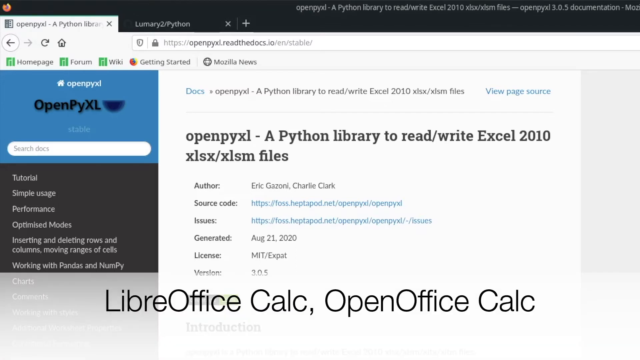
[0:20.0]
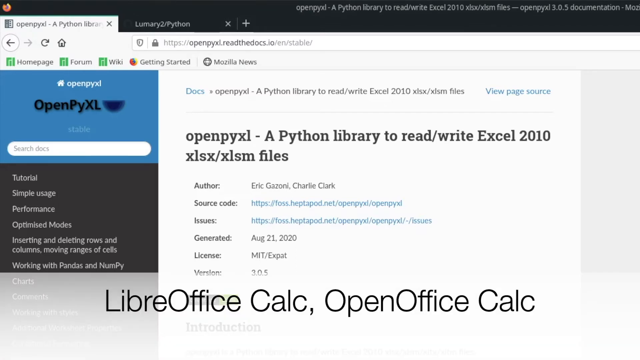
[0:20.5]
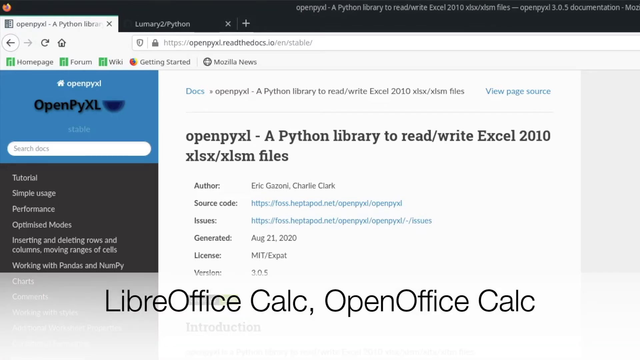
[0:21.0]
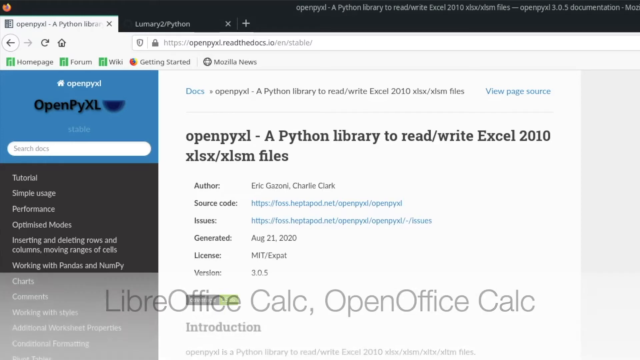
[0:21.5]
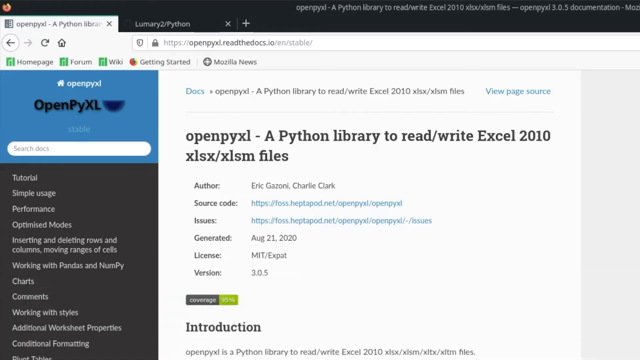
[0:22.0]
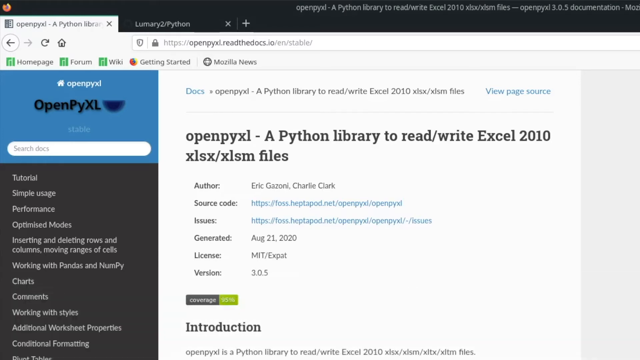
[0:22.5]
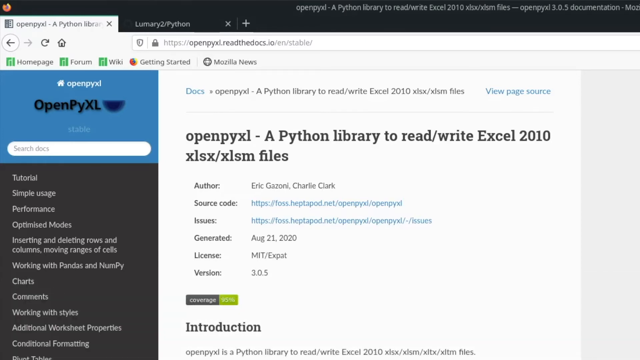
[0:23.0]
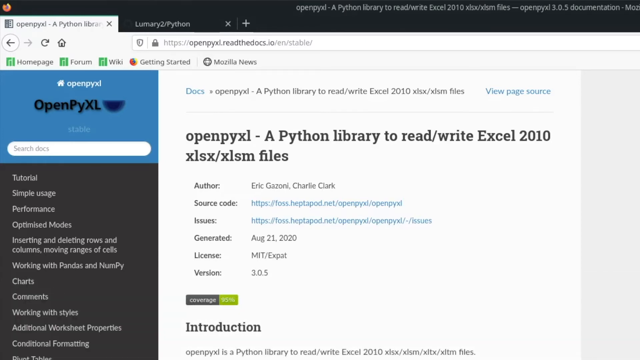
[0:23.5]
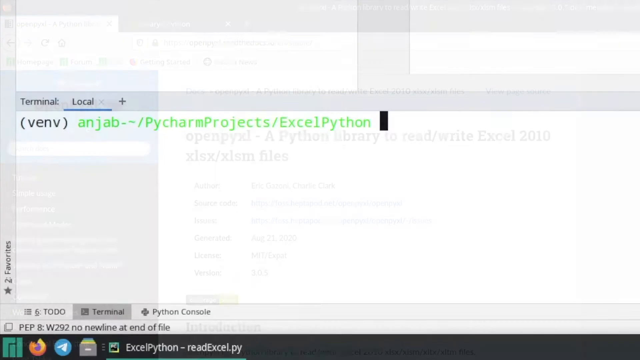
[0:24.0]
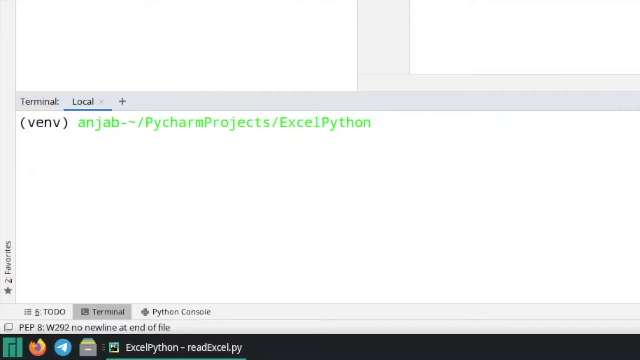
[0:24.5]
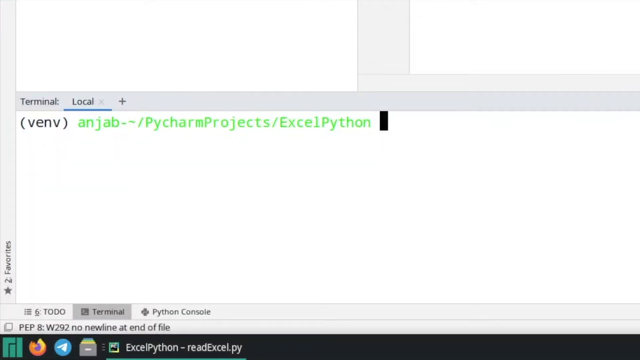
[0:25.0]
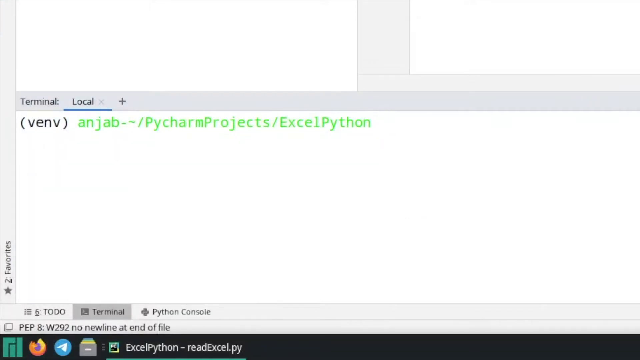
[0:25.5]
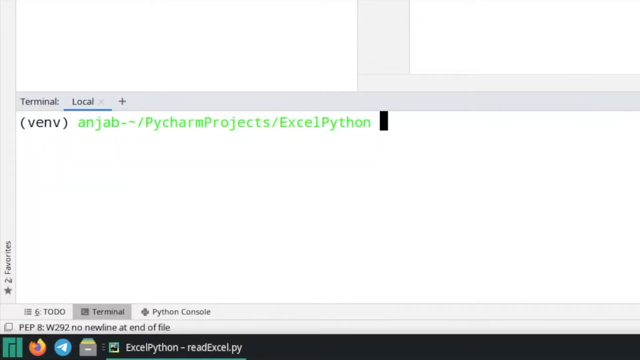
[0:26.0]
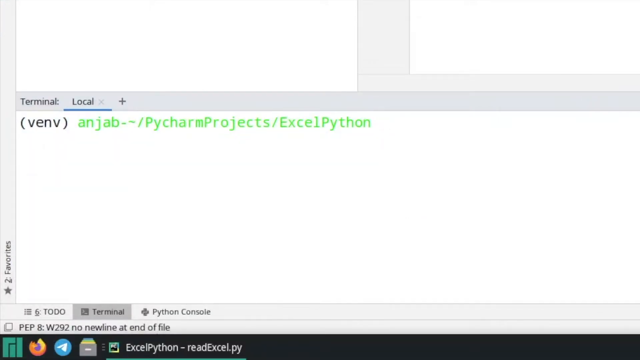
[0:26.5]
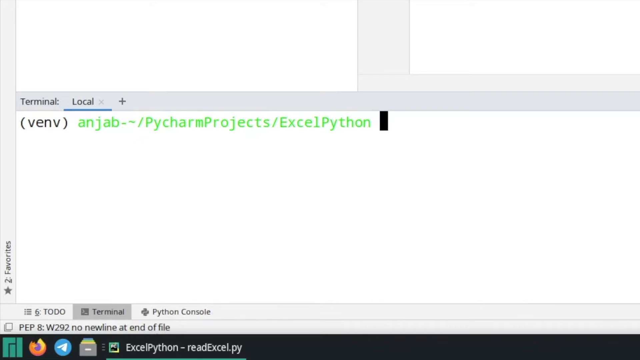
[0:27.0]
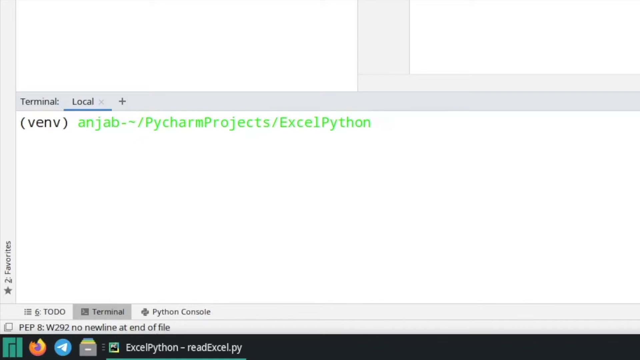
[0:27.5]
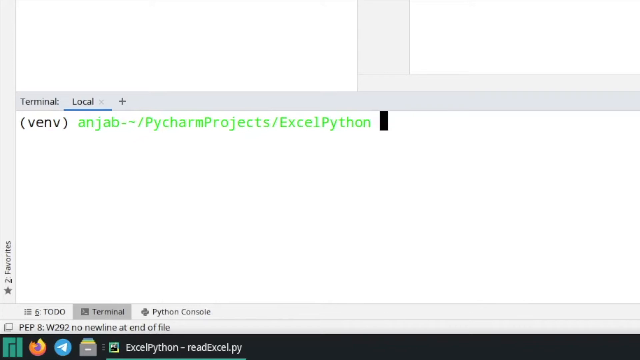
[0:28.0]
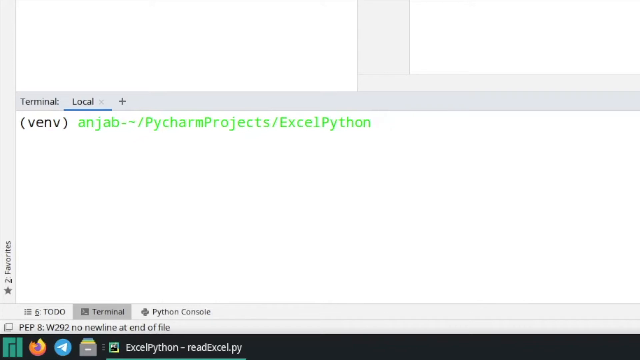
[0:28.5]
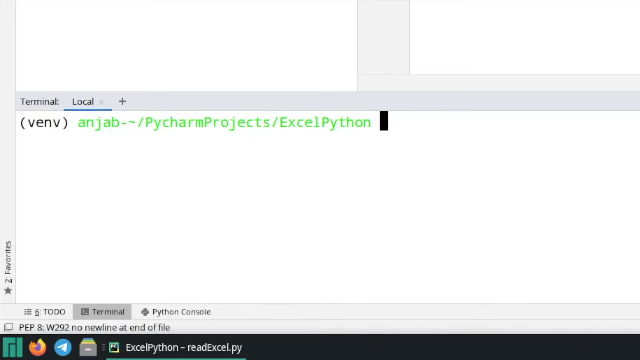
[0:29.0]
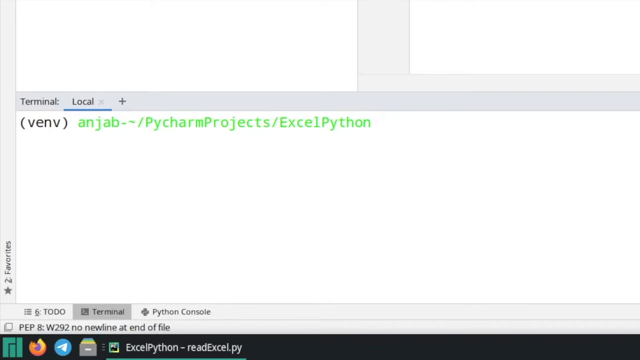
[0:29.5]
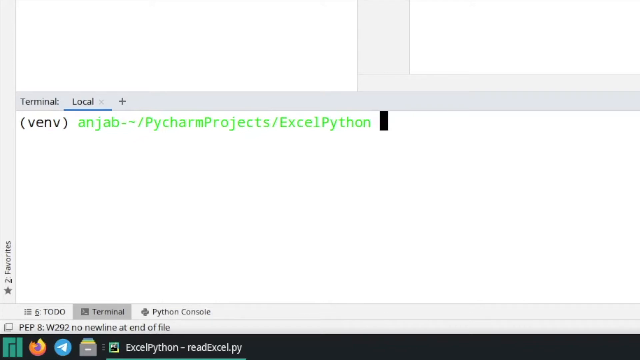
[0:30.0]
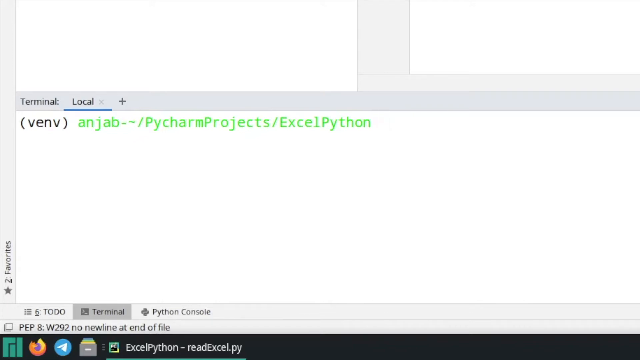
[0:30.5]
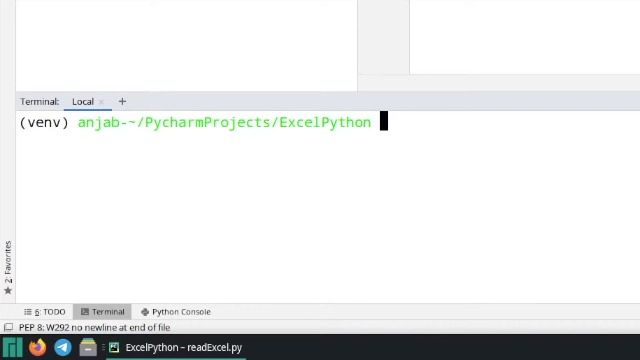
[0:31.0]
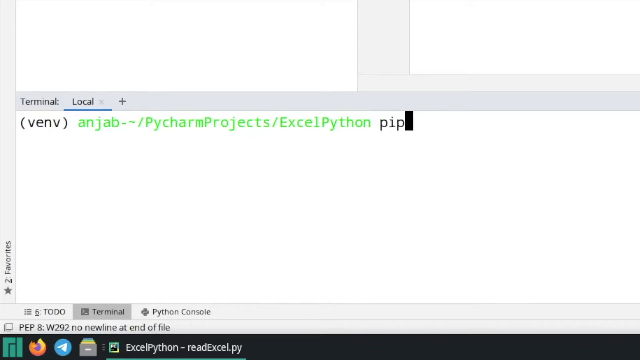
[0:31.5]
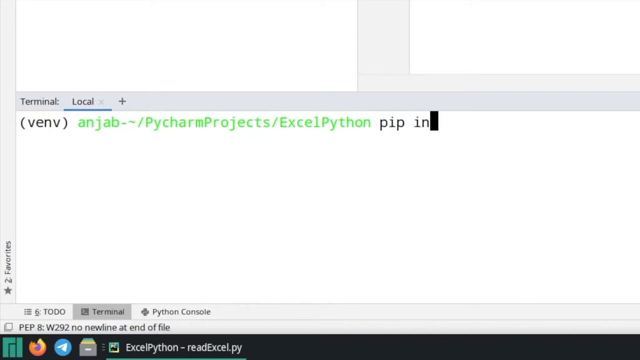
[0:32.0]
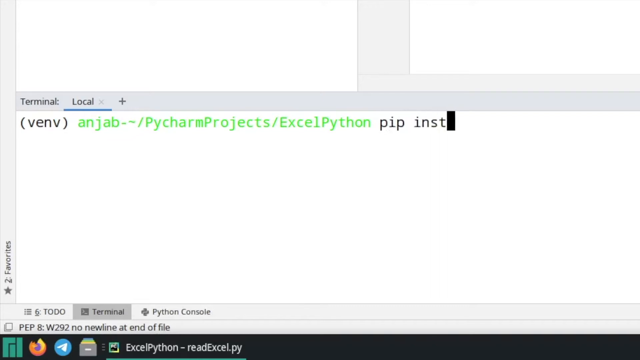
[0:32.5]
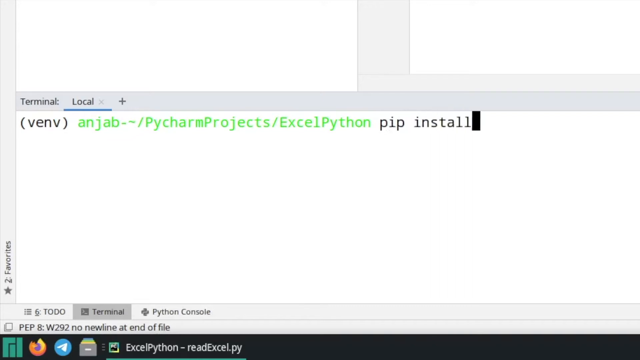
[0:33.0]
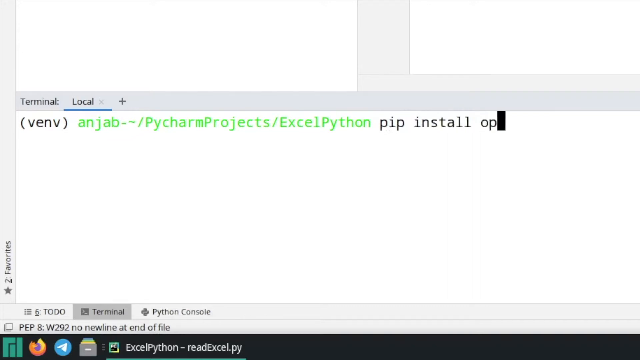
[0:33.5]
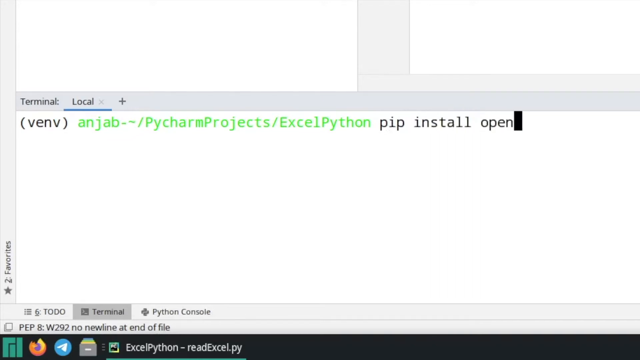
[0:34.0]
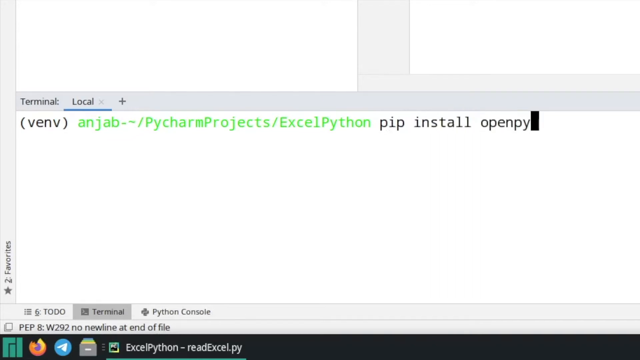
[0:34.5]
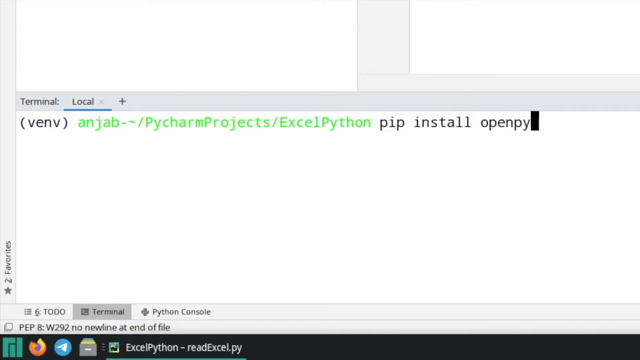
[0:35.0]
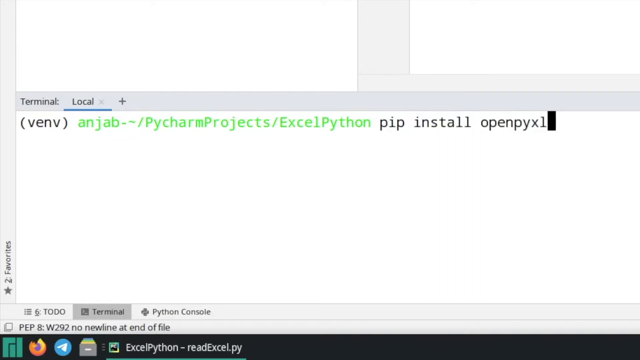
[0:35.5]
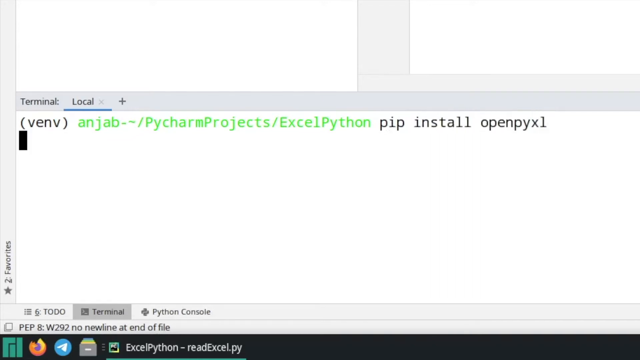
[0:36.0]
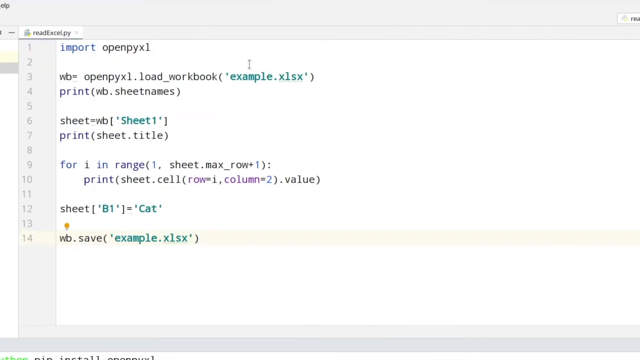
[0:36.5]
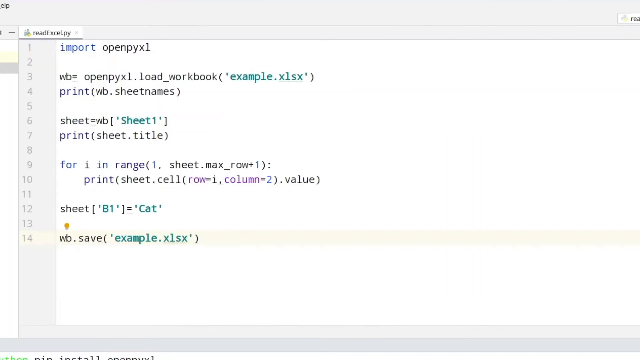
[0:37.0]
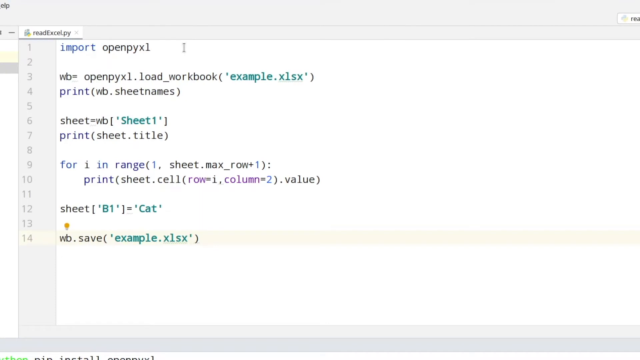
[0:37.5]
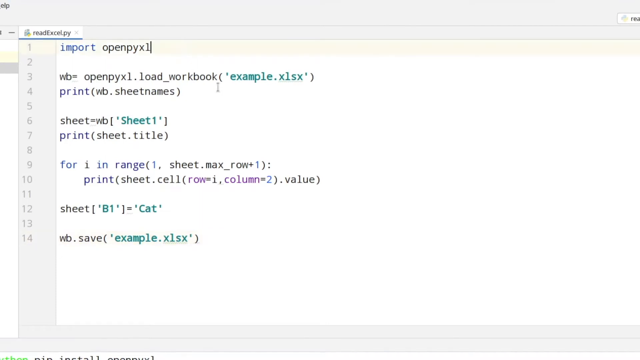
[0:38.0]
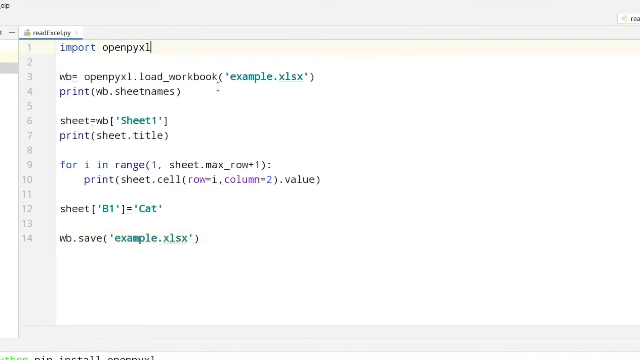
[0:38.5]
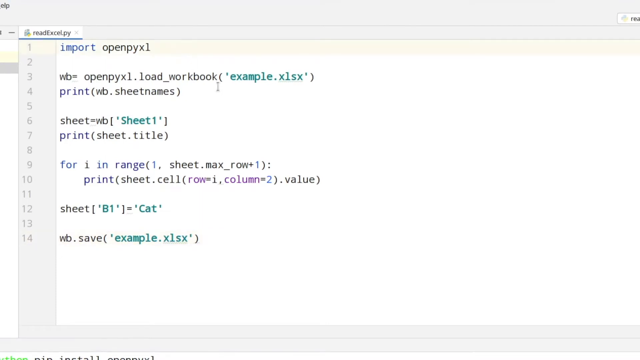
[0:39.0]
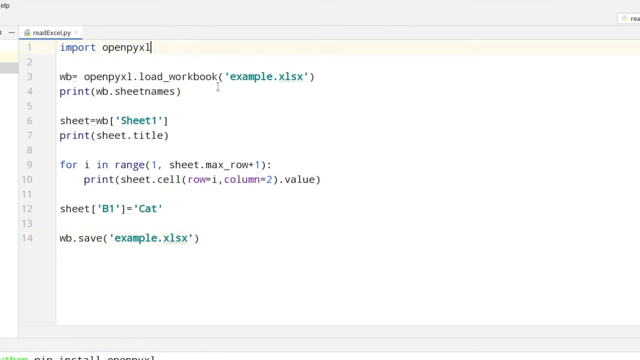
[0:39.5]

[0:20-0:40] A computer screen shows "openpyxl.readthedocs.IO" in a white search bar at the top. Below it, on the left side of the screen, is a panel that is half blue and half black. In the blue part, written in white, it says "openpyxl," and underneath, written in black, it says "openpyxl" again. Below that is a white space that says "search docs," and underneath is a list: "tutorial, simple usage, performance, optimized modes, inserting and deleting rows and columns, moving ranges of cells, working with pandas and numpy, charts, comments, working with styles, additional worksheet properties, conditioning formatting." To the right of the panel, at the top in black, it says "openpyxl - a python library to read / write excel 2010." Underneath, stacked one below the other, are "author eric gazzoni charlie clark," "source code," "issues," "generated august 21st 2020," "license mit expat" and "version 3.0.5."